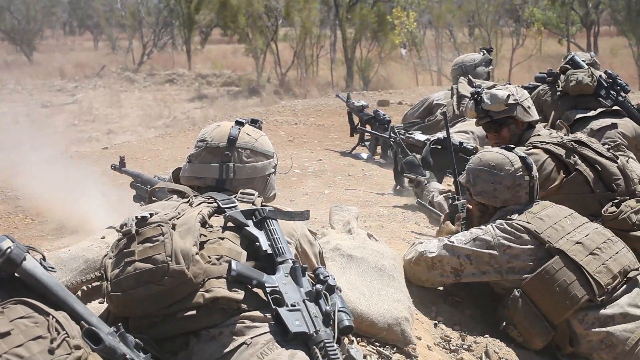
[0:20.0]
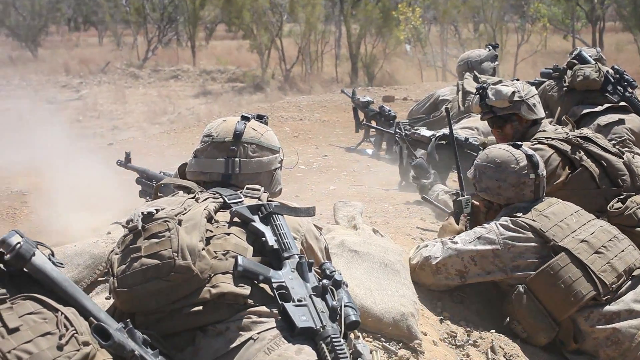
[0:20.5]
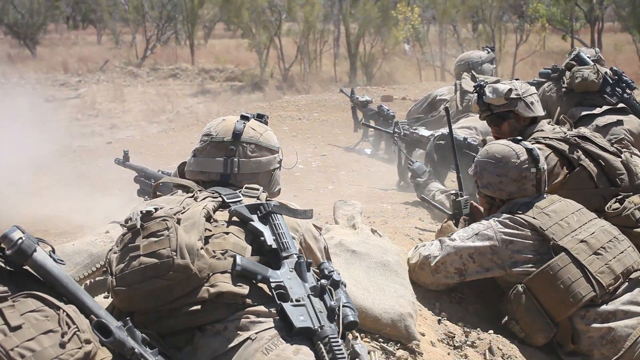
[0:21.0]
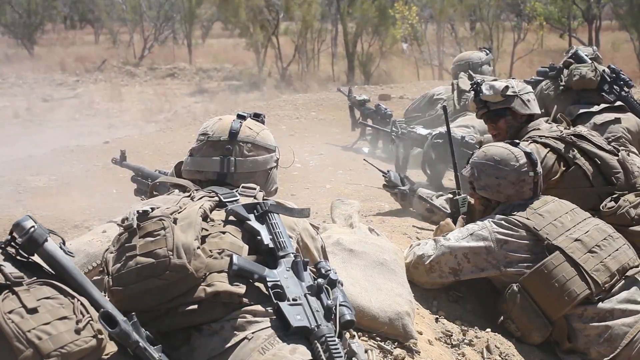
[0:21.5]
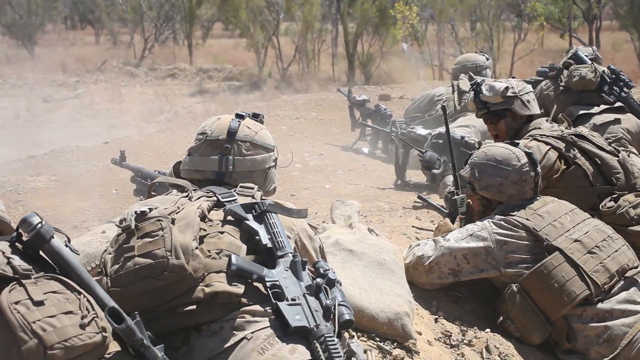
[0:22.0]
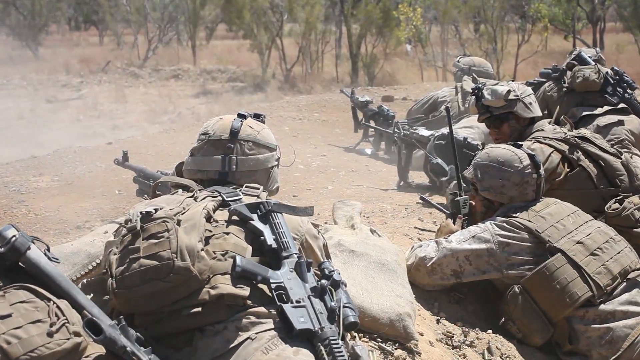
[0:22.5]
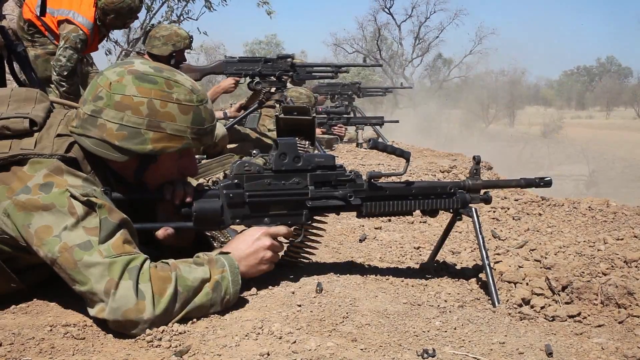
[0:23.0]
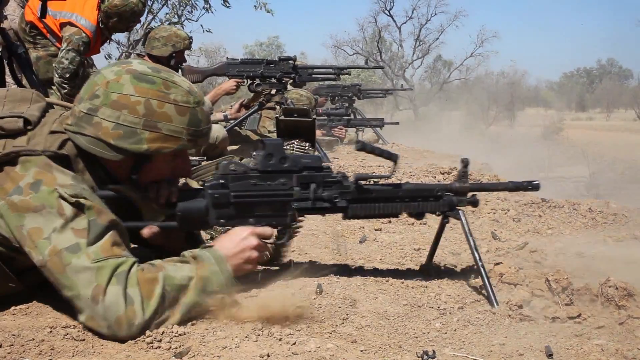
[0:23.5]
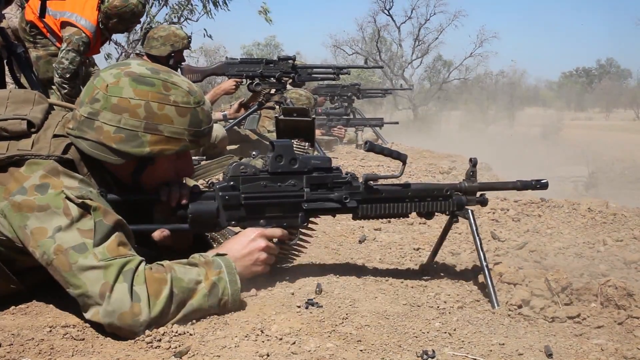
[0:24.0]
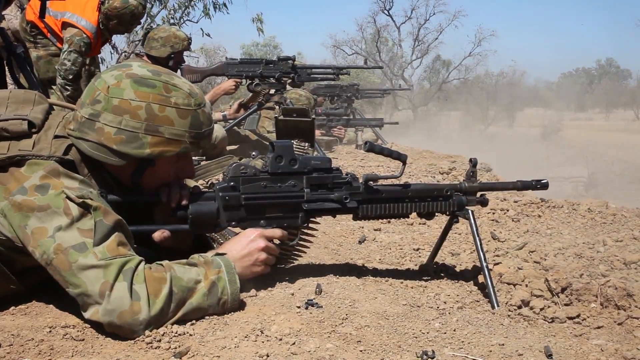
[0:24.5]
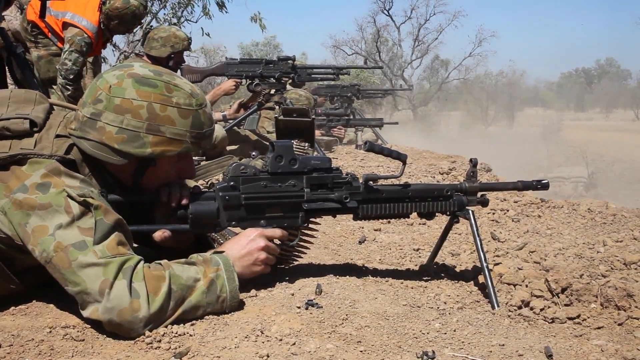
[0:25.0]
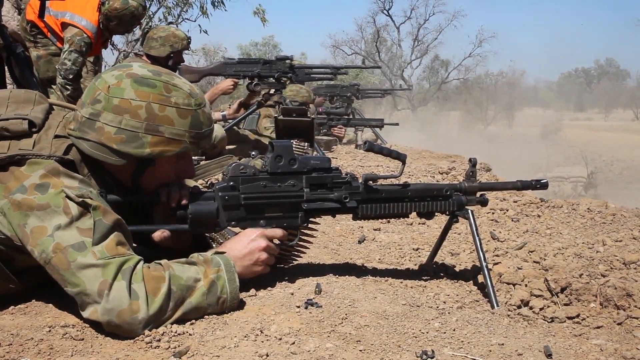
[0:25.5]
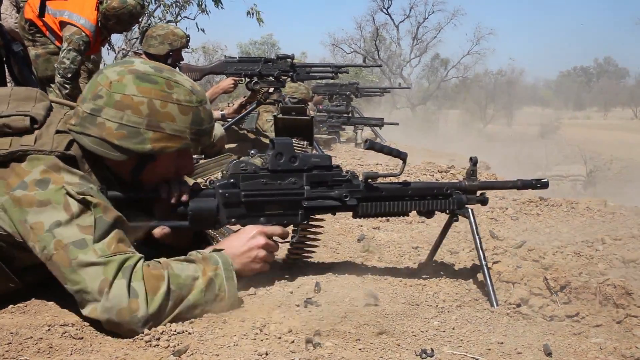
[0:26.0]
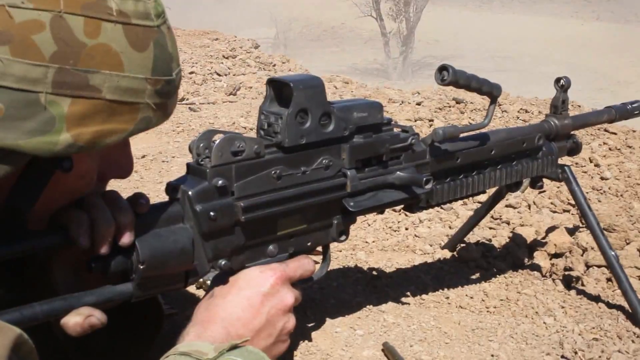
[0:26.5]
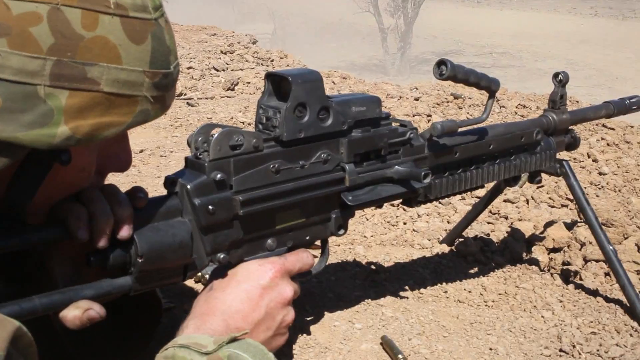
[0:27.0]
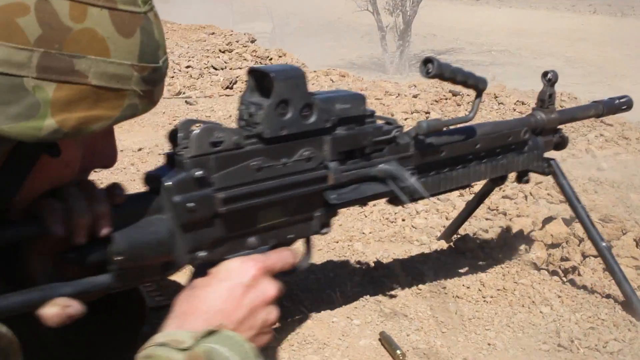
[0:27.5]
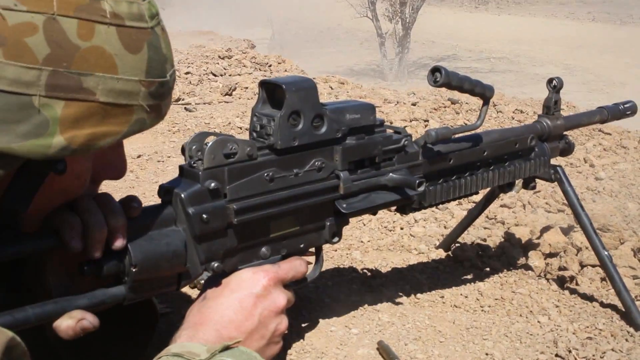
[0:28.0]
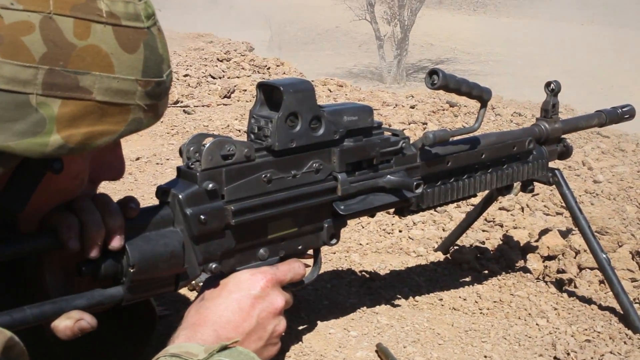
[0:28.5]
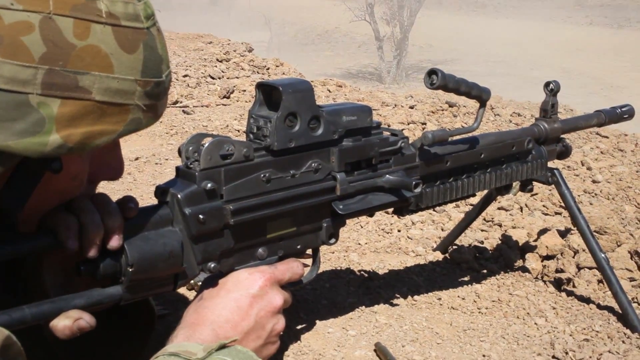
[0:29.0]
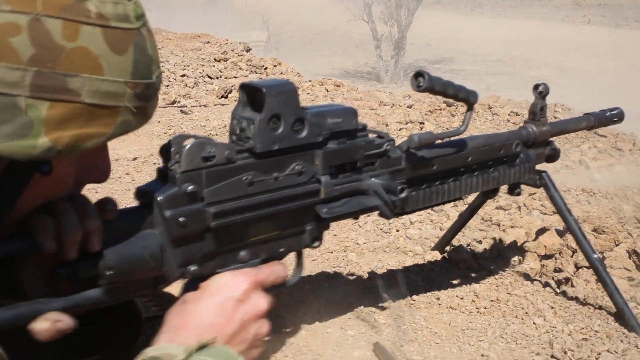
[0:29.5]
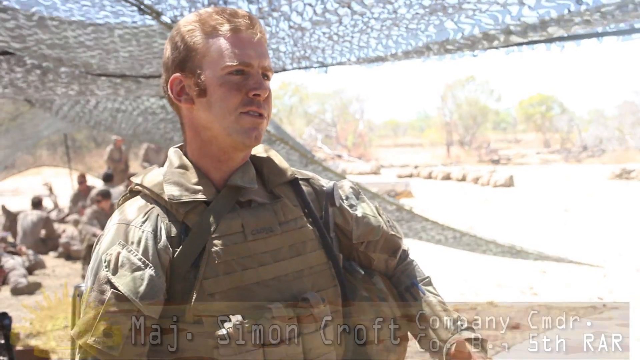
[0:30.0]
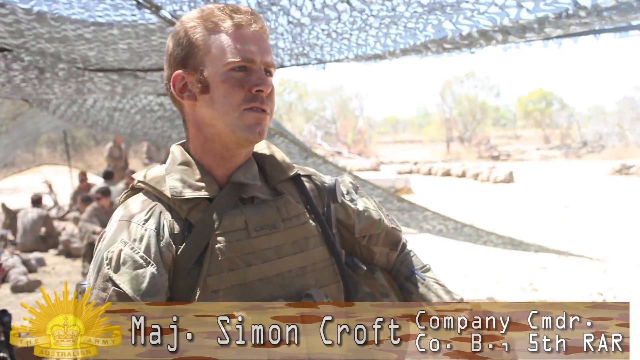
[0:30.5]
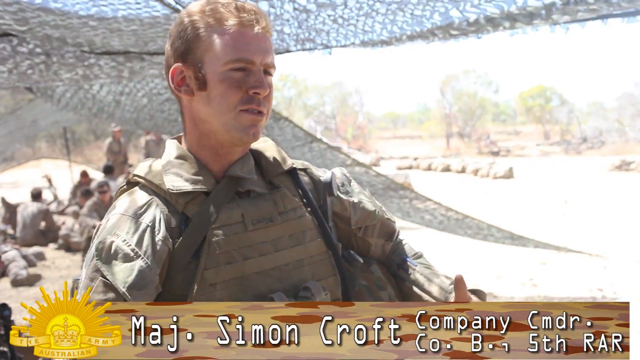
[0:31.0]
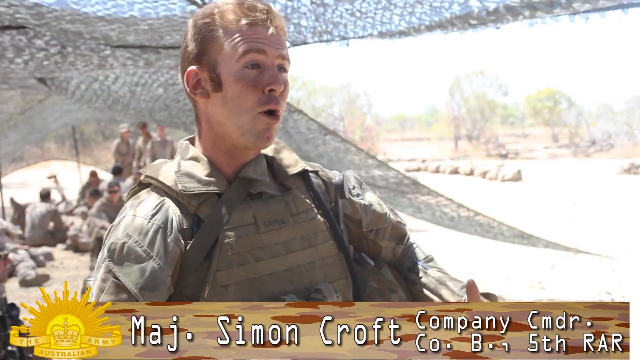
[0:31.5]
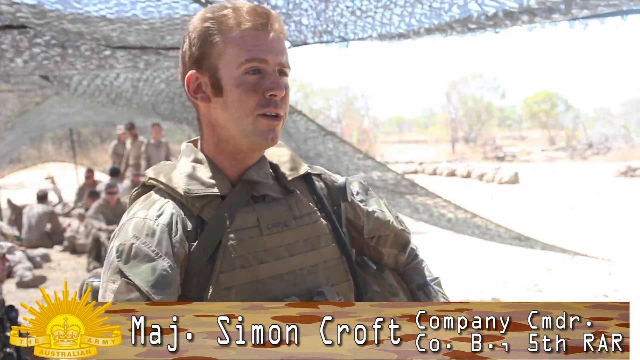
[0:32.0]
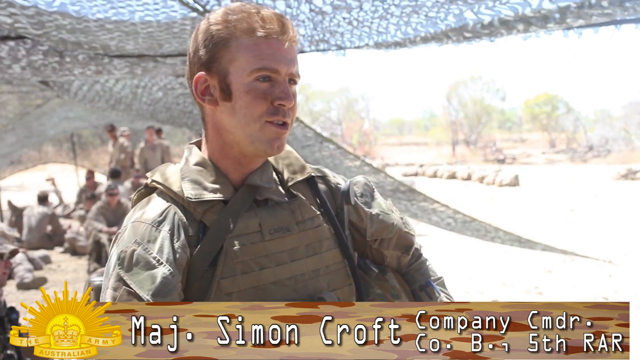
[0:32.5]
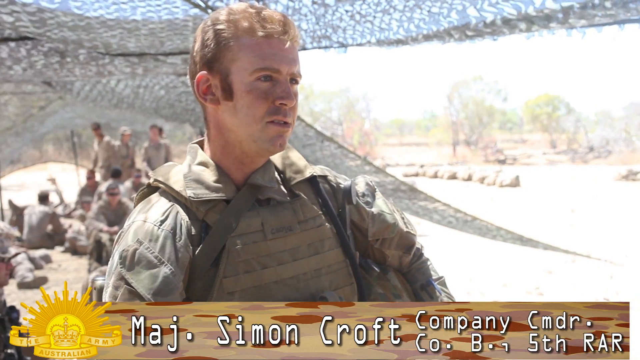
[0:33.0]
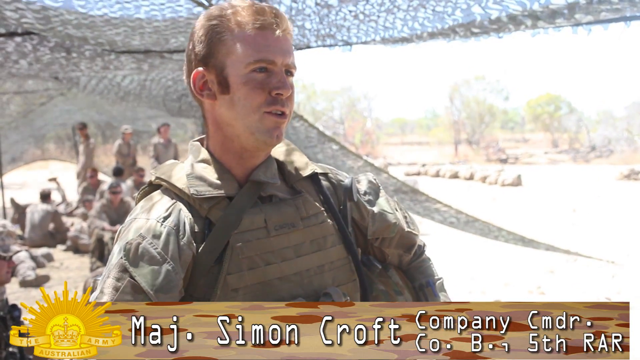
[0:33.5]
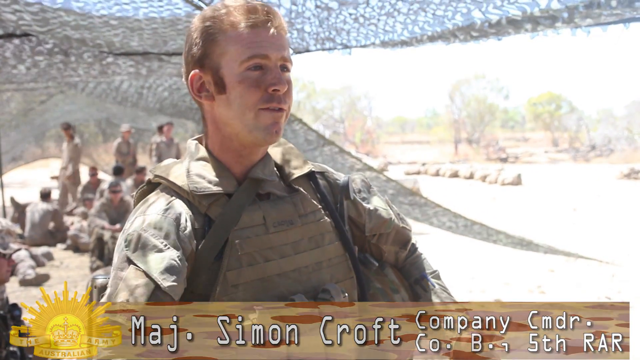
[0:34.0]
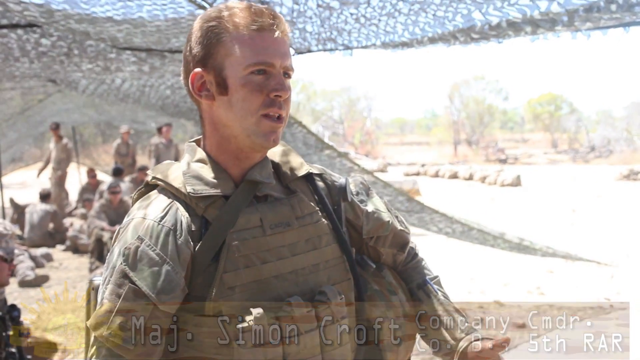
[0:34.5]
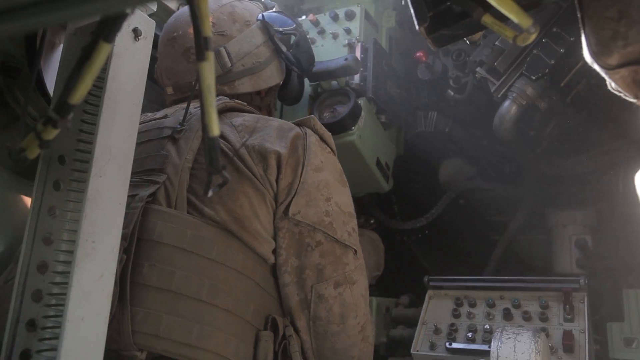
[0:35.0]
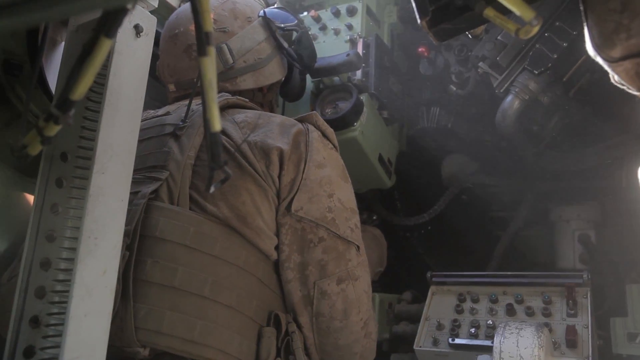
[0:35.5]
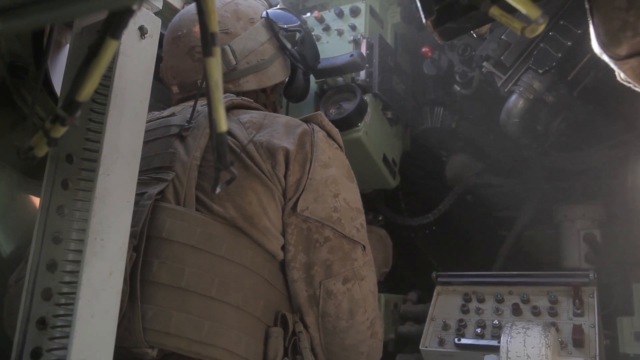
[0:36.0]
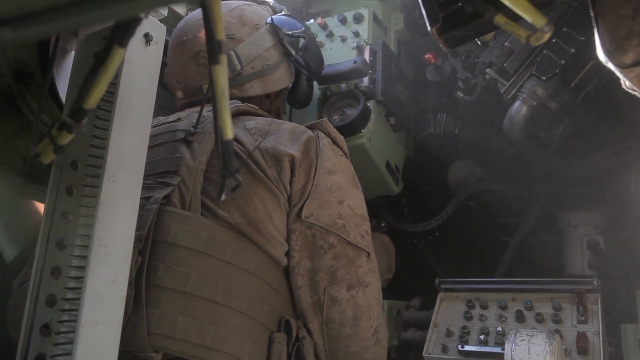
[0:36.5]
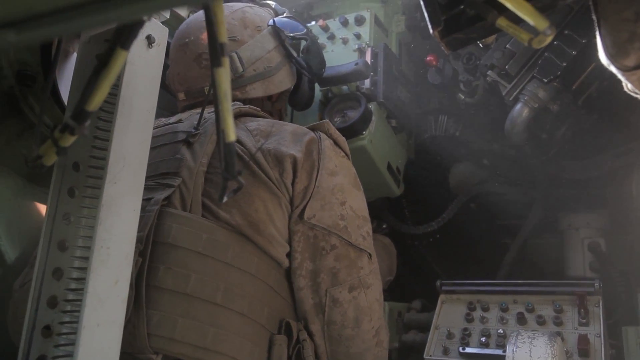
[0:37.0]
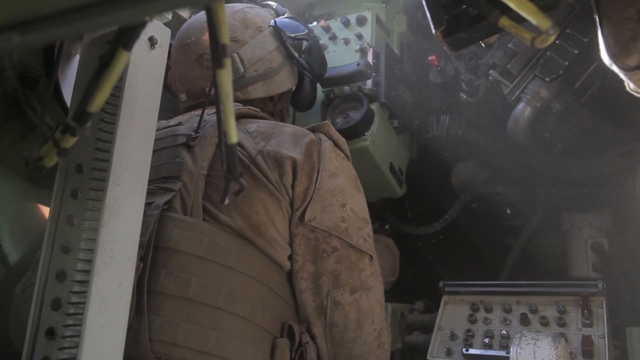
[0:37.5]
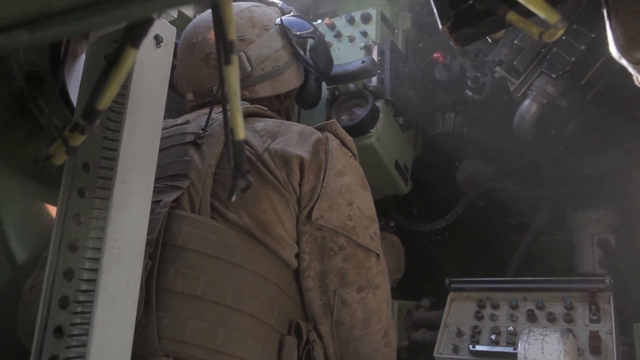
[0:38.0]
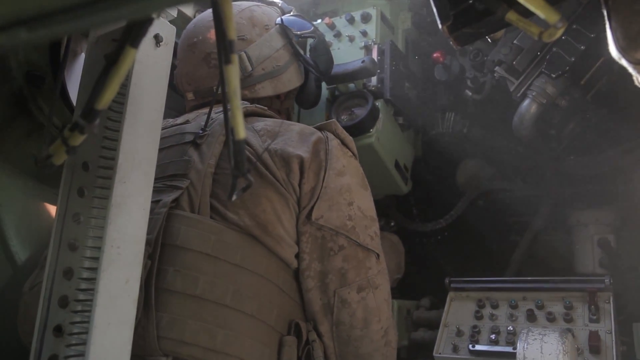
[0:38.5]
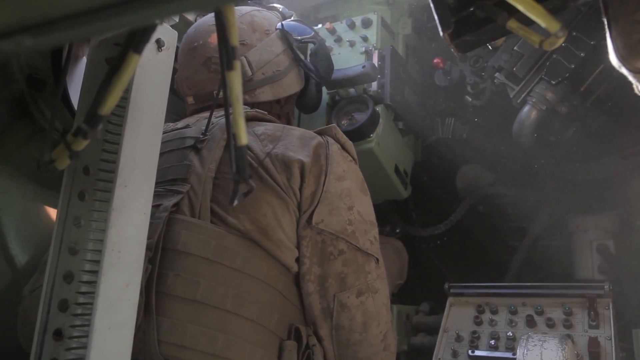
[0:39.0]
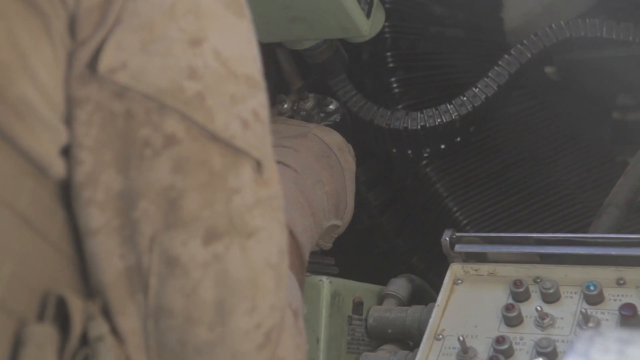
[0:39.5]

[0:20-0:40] Multiple soldiers wearing greenish tan camouflage and Kevlar vests rest on a sort of berm made of sandy dirt, firing a belt-fed, crew-serviced light machine gun. Other soldiers seem to be shouting into a radio and at each other, and they are all looking in the same direction. The footage cuts to multiple soldiers in a green and brown camouflage pattern resting on a small berm, all equipped with similar light machine guns. They fire them towards the right, down what looks to be a range. In the top left corner, a soldier in a similar uniform but wearing an orange safety vest with silver reflective tape leans over one of the soldiers' shoulders as they fire, seemingly instructing or observing them. The video cuts to a close-up of one of the soldiers firing the light machine gun, who fires three-round bursts twice.